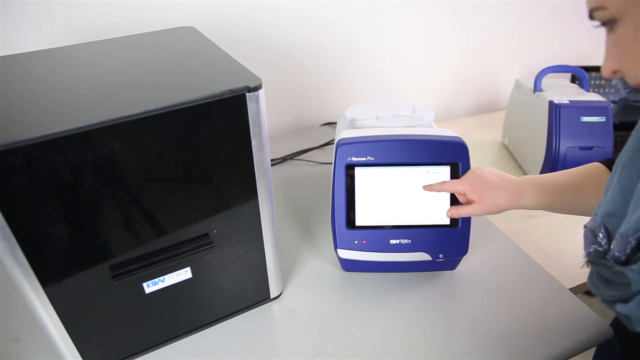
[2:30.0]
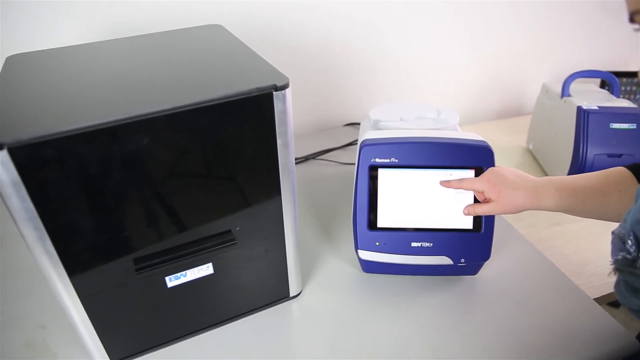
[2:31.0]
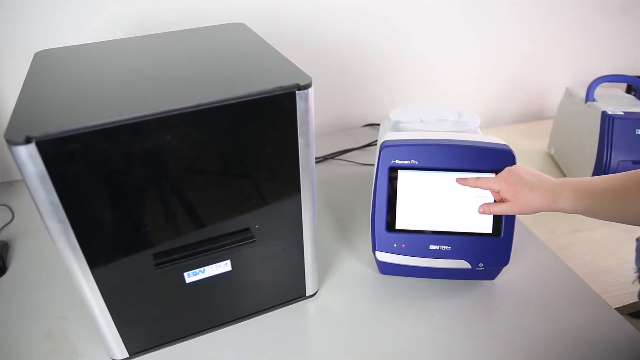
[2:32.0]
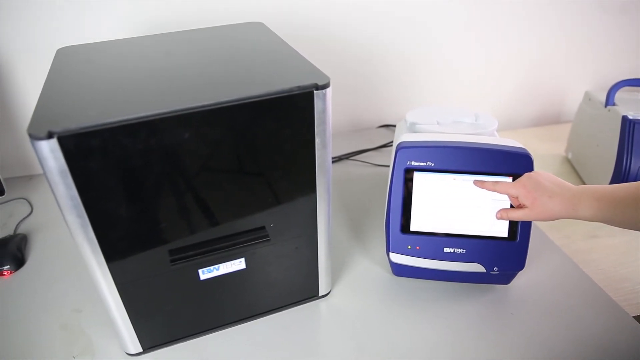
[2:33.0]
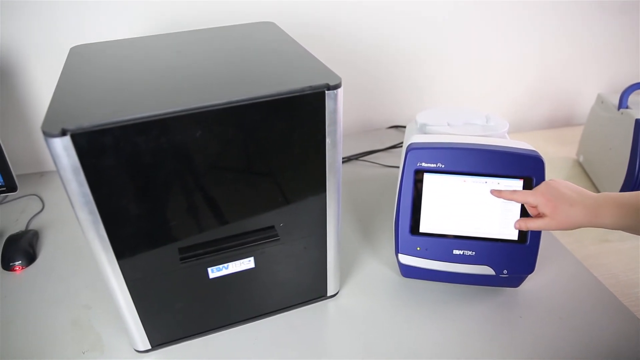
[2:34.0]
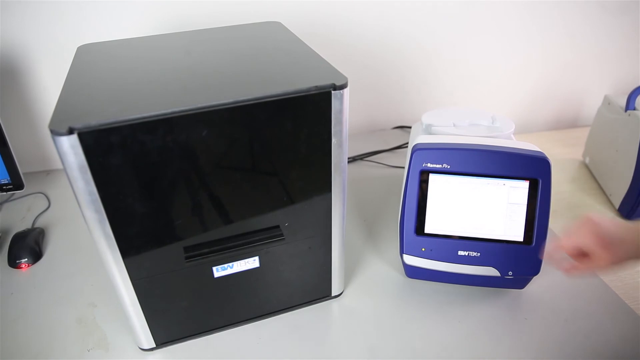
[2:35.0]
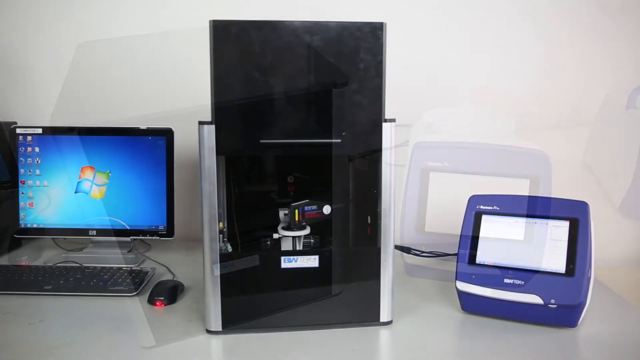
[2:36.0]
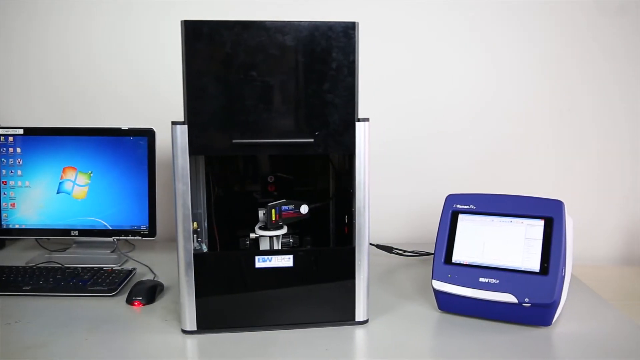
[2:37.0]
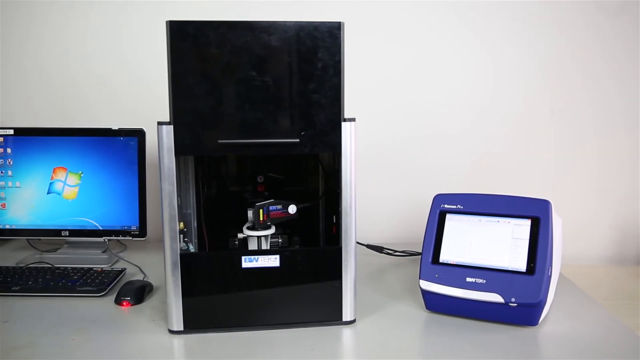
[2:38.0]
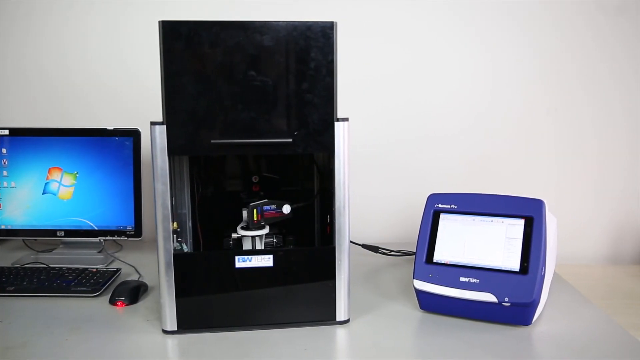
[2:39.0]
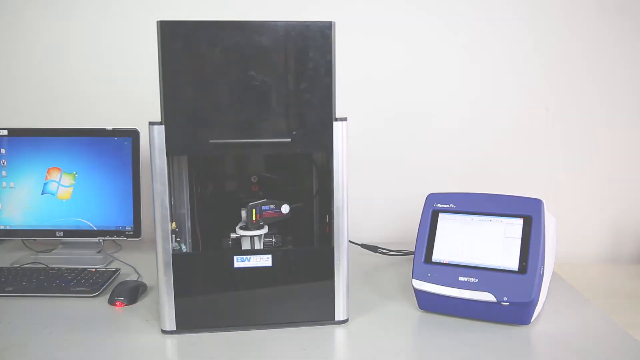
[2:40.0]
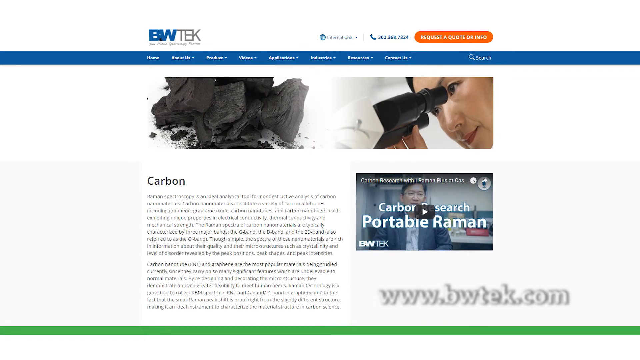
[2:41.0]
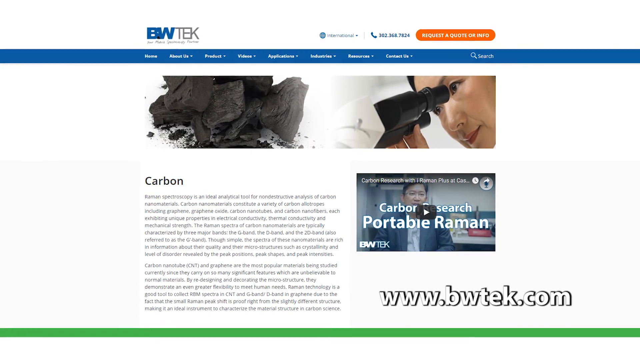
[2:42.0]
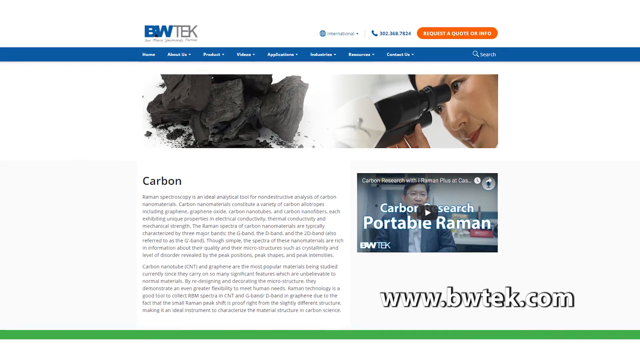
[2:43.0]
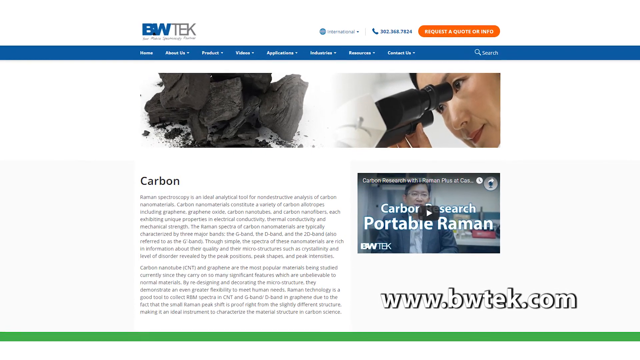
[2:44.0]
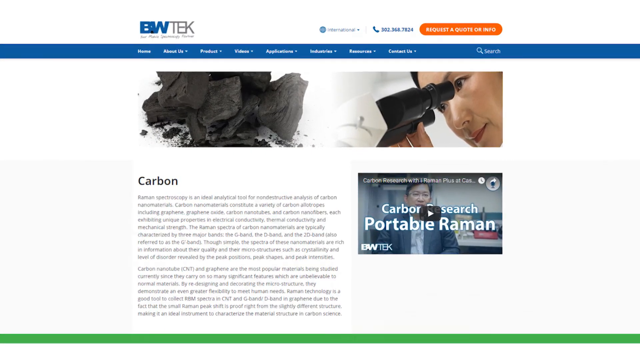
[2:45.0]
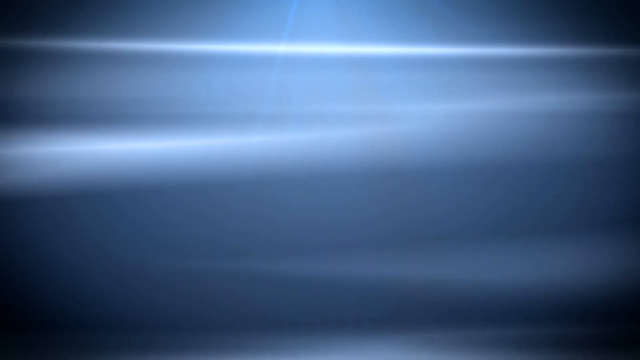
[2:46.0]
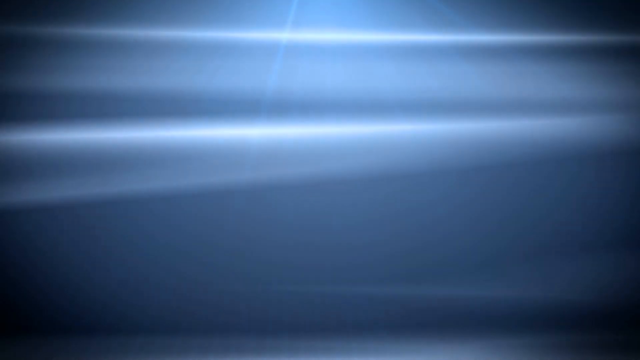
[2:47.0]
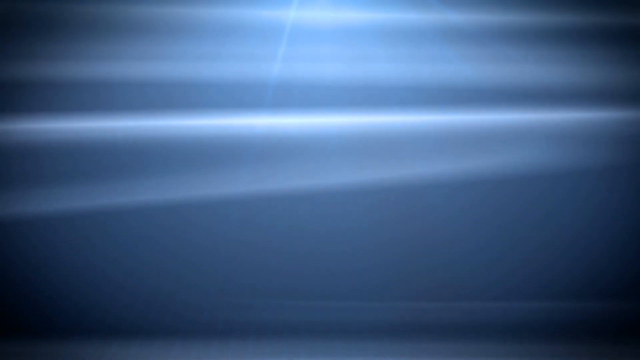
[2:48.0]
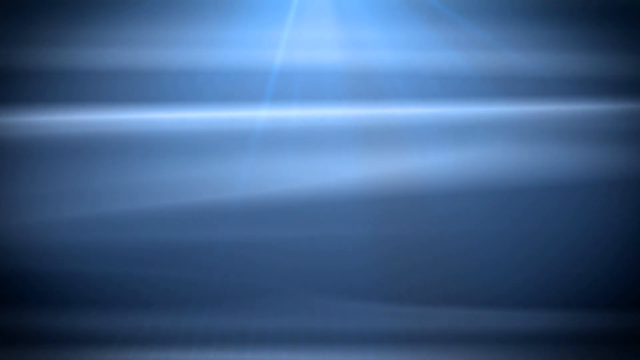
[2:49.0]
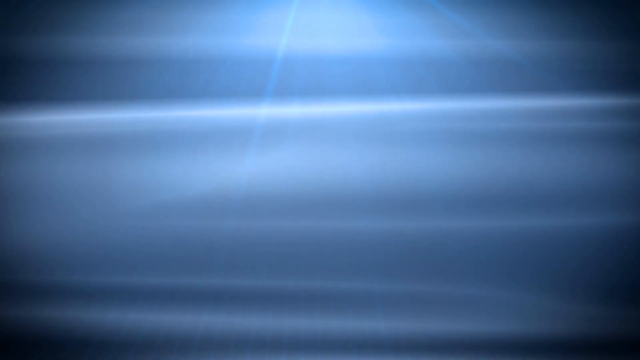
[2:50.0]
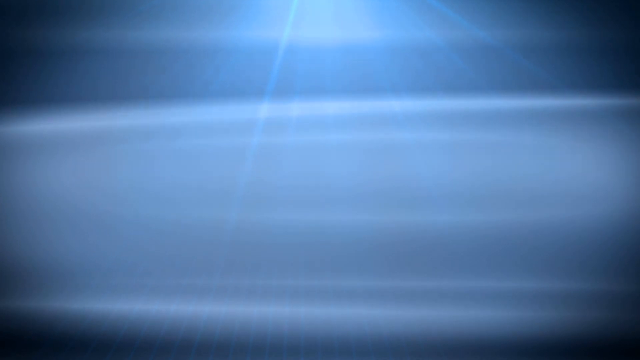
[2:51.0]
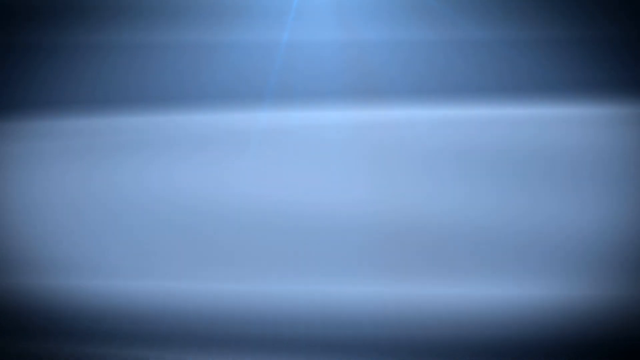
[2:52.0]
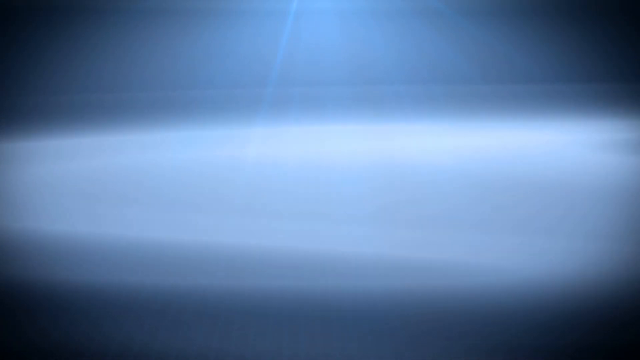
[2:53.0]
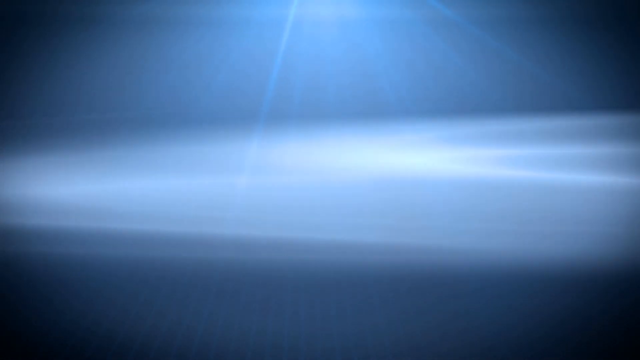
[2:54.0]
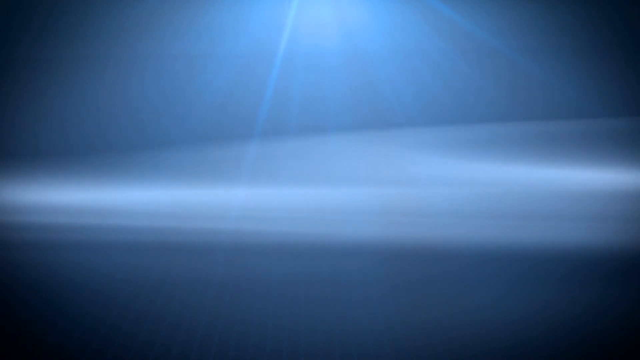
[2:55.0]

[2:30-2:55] A woman briefly shows part of her face on the right-hand side of the screen. The camera rotates to the left, showing just her pointer finger pointing at a small white screen on the small blue machine; the screen remains white. The next camera angle shows the Windows computer on the left, the open black machine in the center, and the smaller blue machine on the right, apparently all connected with cords, and the camera slowly moves to the right. A website screen then reads "BWTEK", with an article titled "Carbon" and two paragraphs of small black text underneath, and a YouTube video on the right-hand side. The closing screen is a blue effect screen with what looks like moving light, and the video ends.